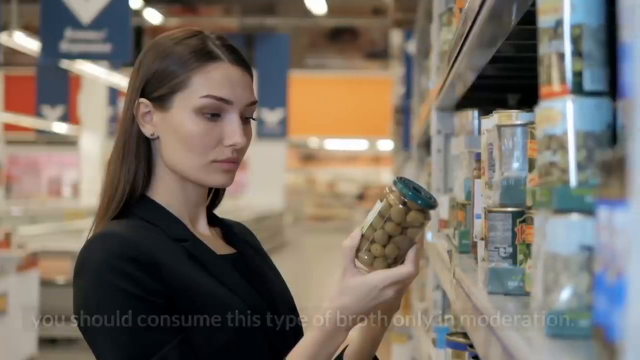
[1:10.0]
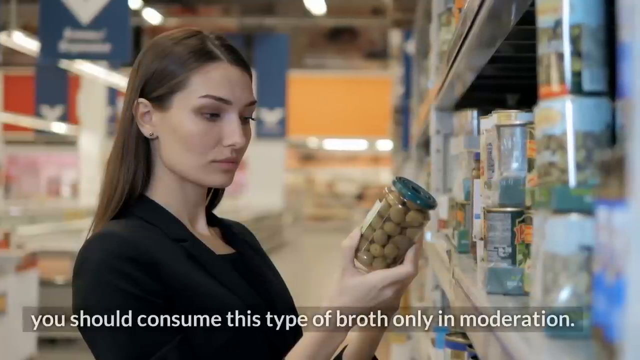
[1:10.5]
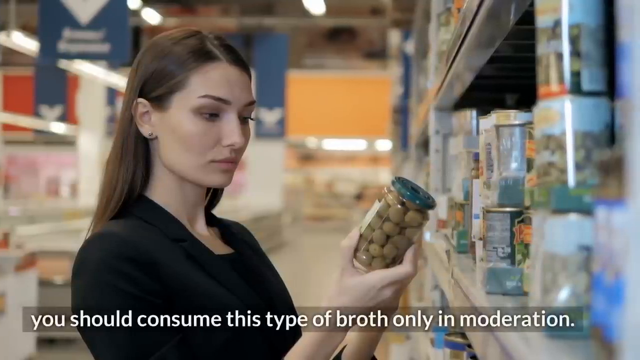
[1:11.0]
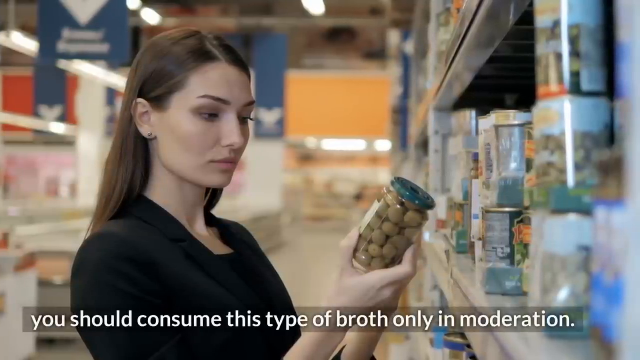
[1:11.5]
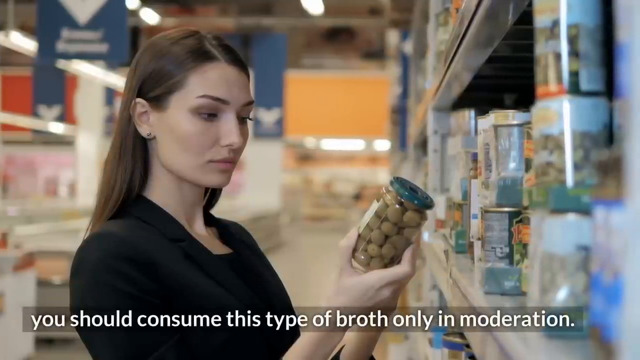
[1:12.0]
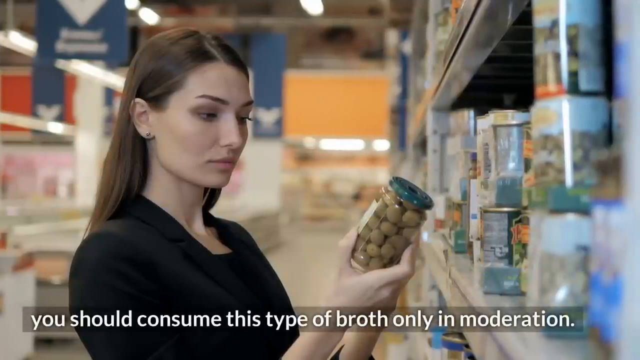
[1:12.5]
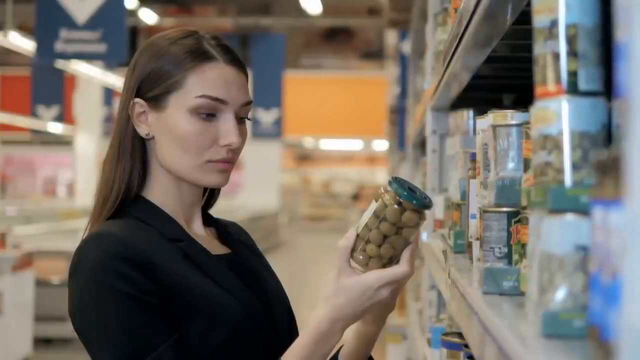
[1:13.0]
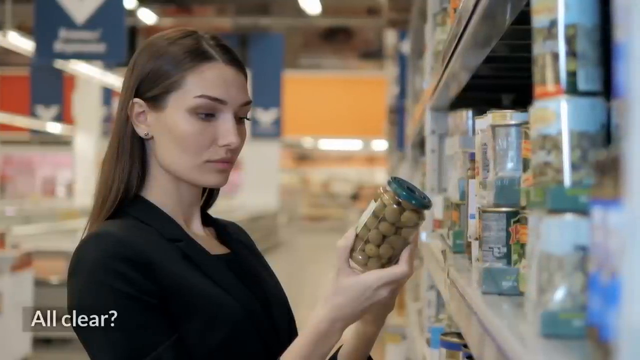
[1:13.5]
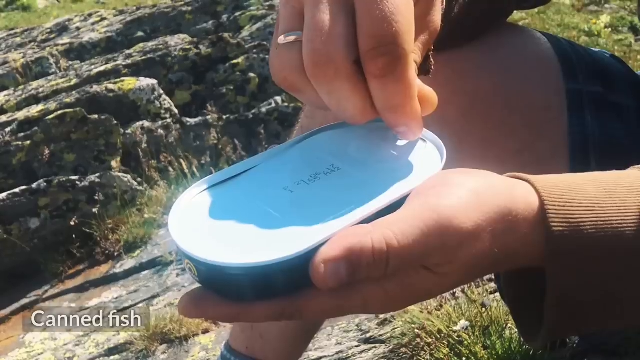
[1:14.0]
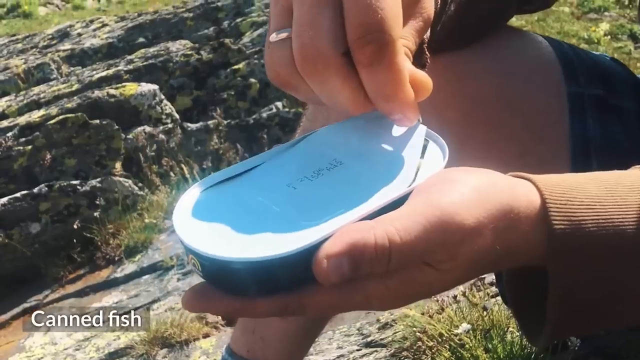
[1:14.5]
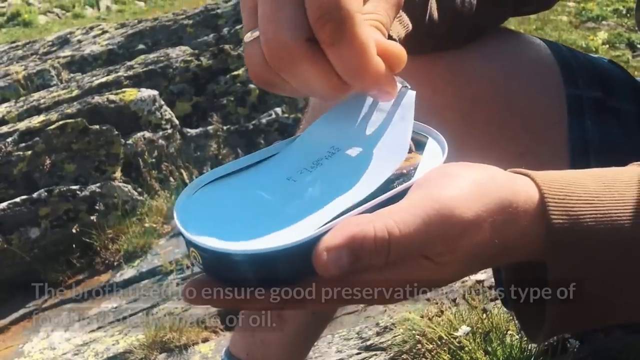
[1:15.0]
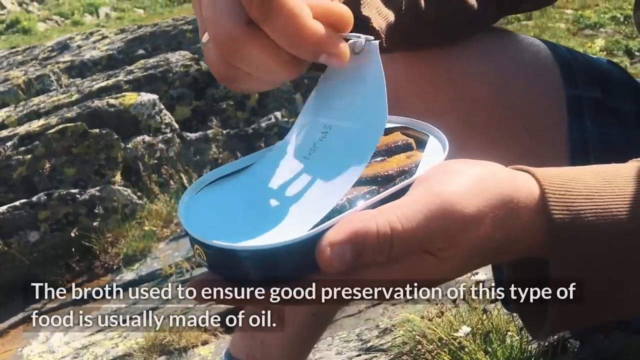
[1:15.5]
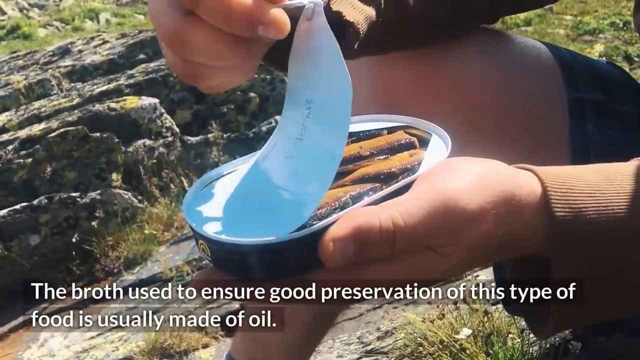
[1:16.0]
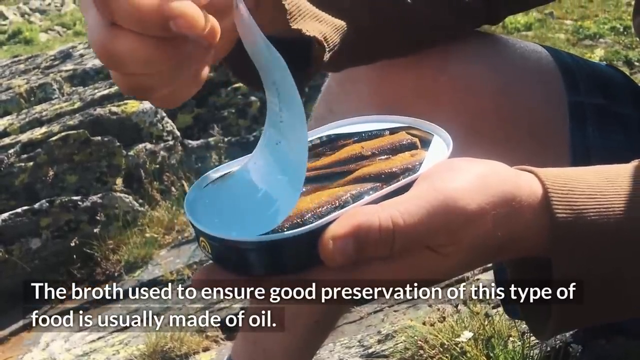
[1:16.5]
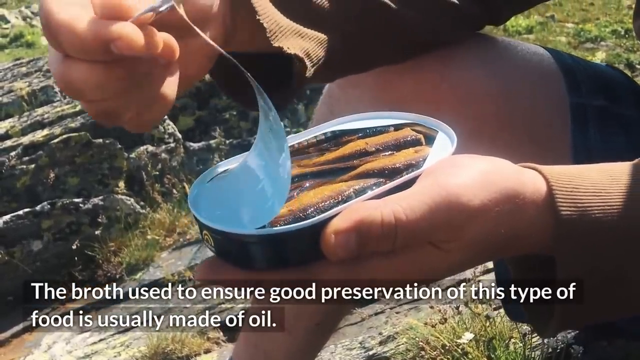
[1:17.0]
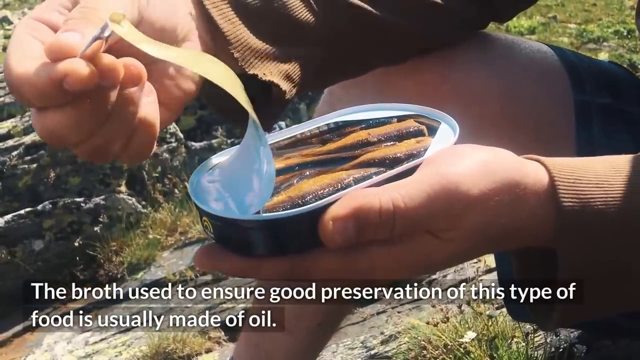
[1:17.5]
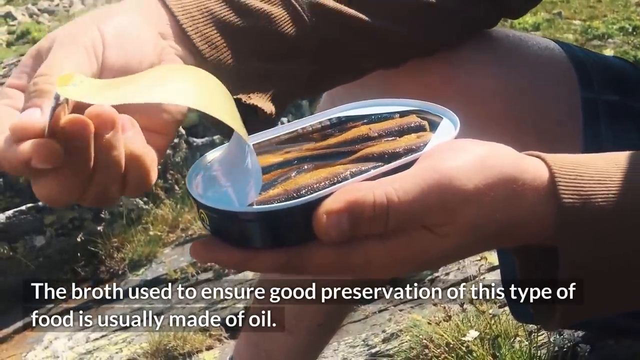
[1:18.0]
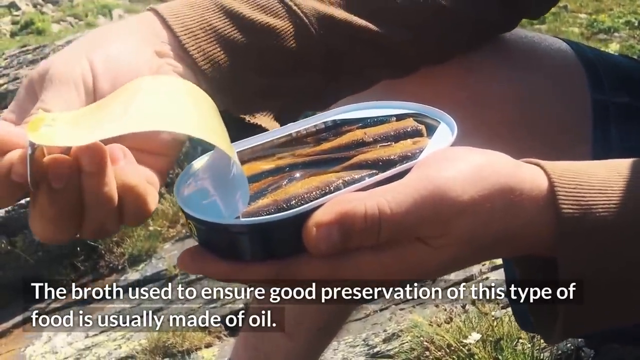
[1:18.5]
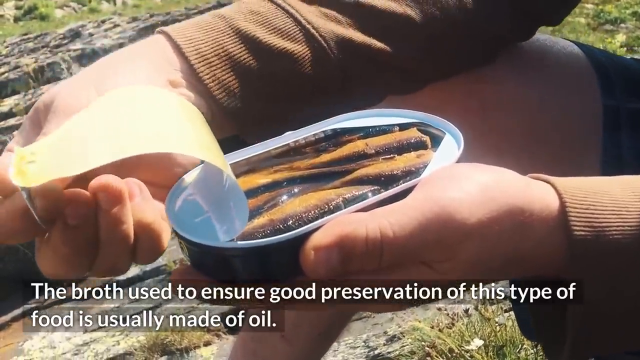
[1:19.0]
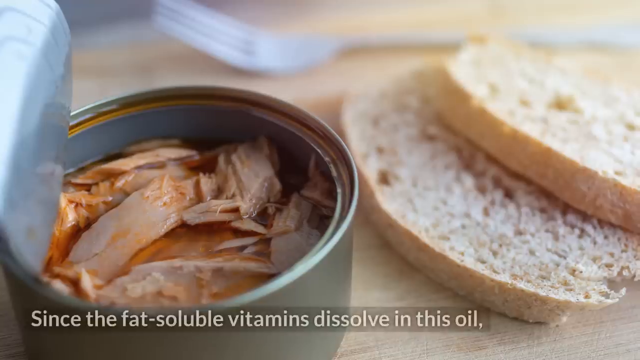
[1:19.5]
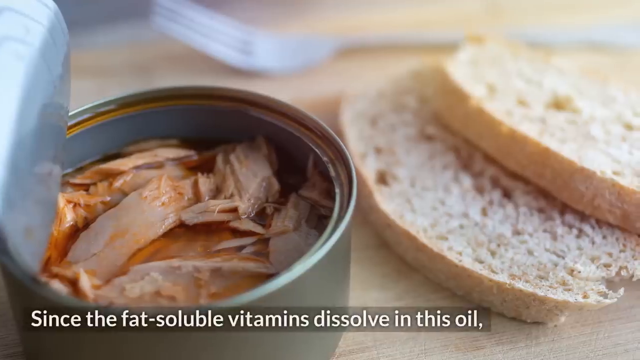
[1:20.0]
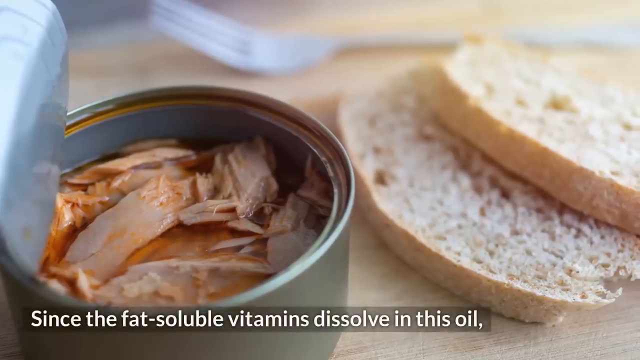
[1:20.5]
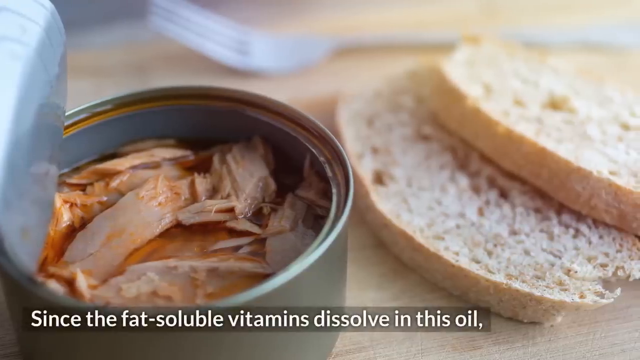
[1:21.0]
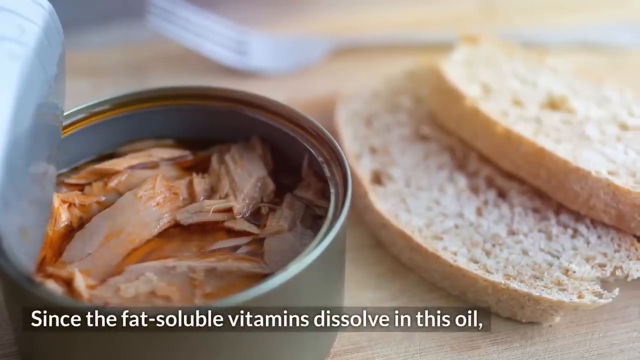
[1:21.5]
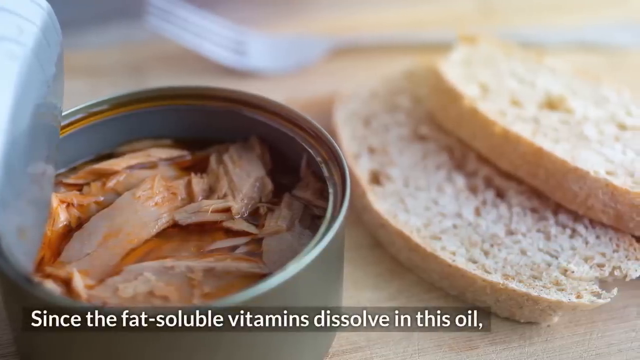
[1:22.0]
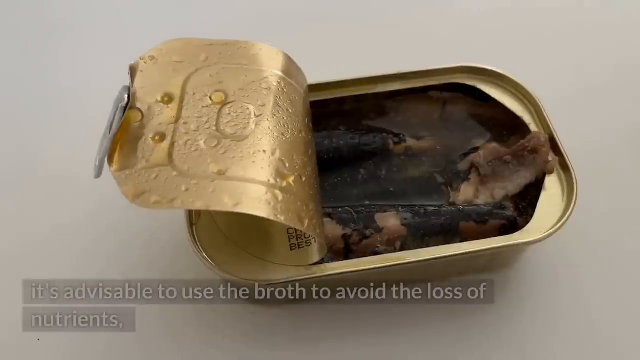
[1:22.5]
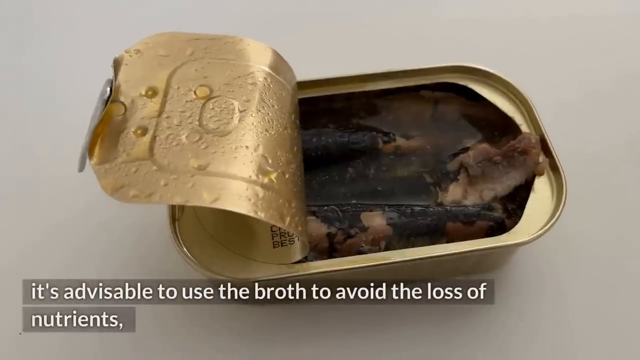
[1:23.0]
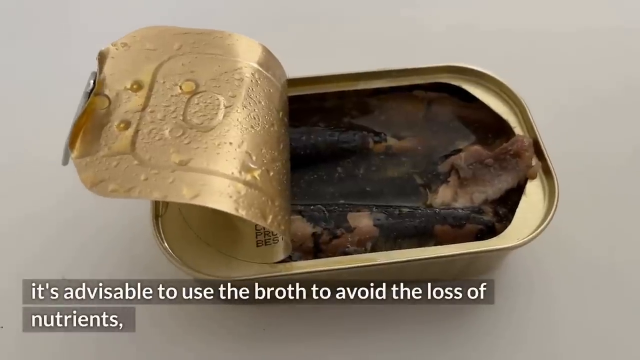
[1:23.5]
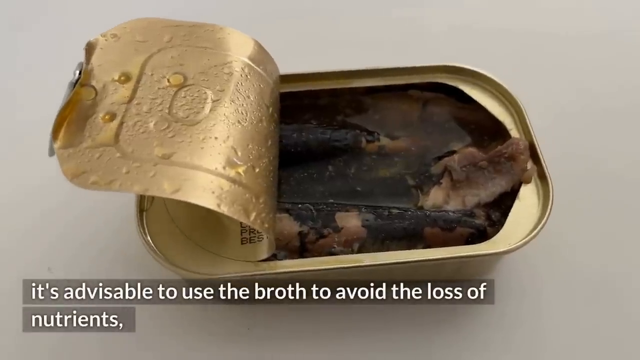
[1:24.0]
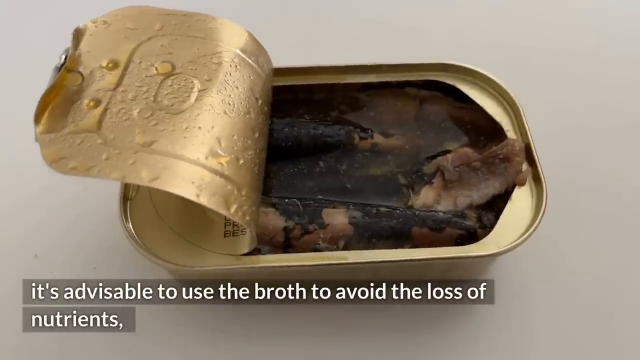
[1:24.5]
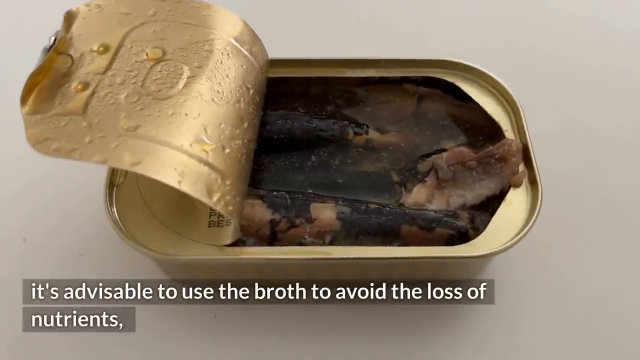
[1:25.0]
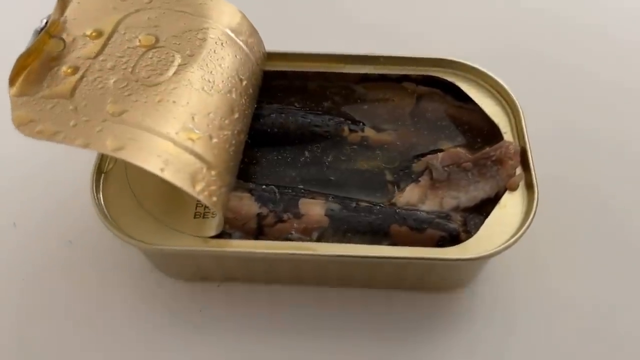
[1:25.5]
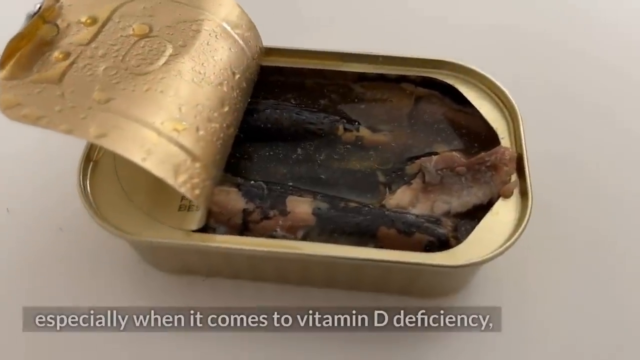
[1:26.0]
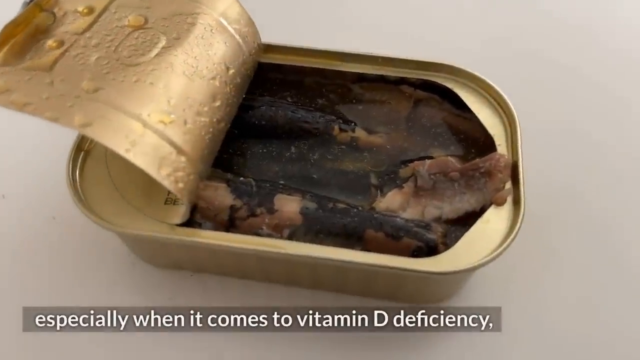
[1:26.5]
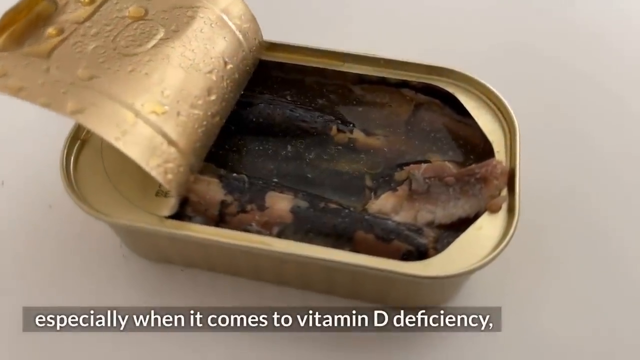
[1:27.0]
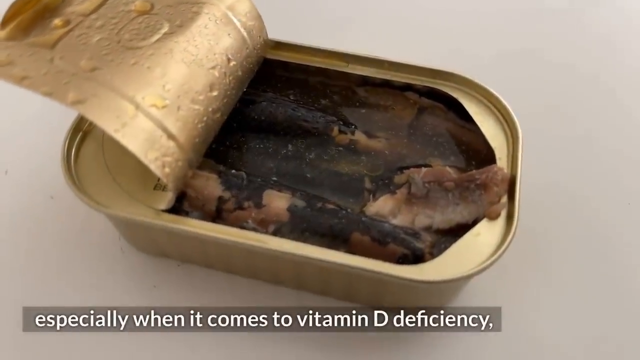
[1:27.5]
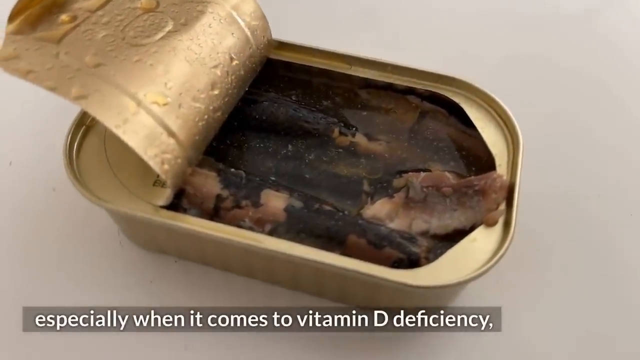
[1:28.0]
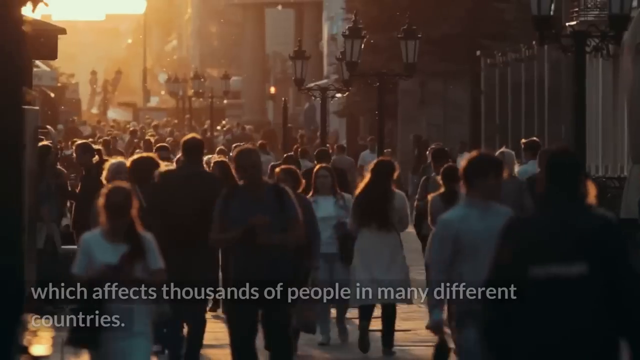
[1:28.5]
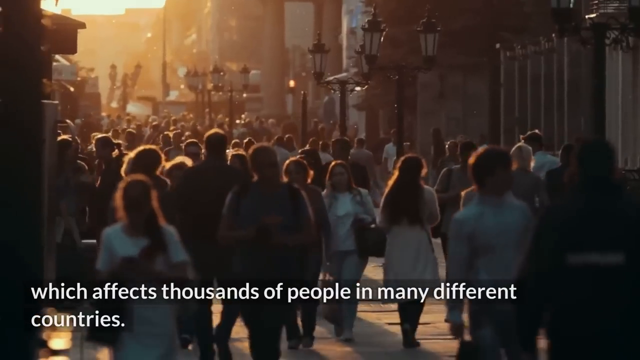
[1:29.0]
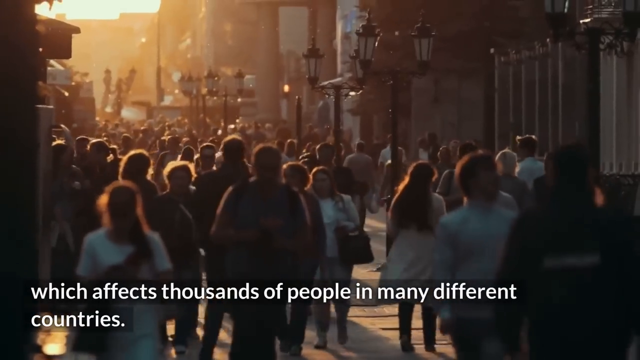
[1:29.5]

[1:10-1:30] In a close-up, somebody opens a can of sardines with numbers on top of the lid. Only a little of their body is visible; they look like they are sitting or crouching down, and they have a ring on their right hand. As they open the fish, text reads "canned fish. The broth used to ensure good preservation of this type of food is usually made of oil." Next, the text "since the fat-soluble vitamins dissolve in this oil" appears over a different can of meat on top of a brown table, with two slices of bread next to the can and a white fork in the background. Another open can of sardines follows: a gold can on a table by itself, with the text "it is advisable to use the broth to avoid the loss of nutrients. Especially when it comes to vitamin D deficiency." The final shot shows a large crowd of people walking around outside.